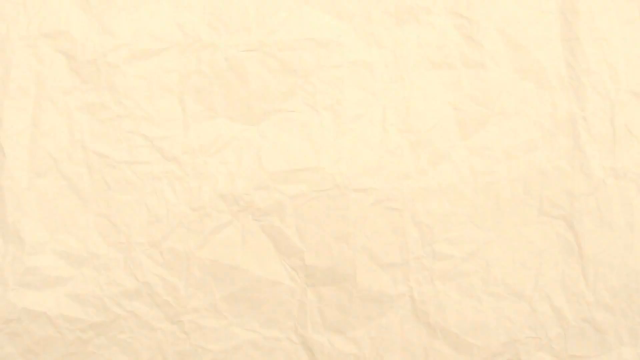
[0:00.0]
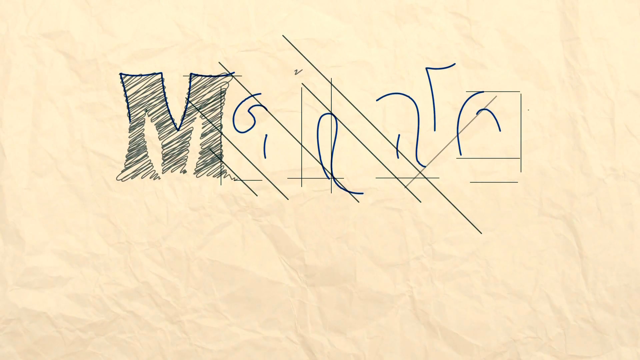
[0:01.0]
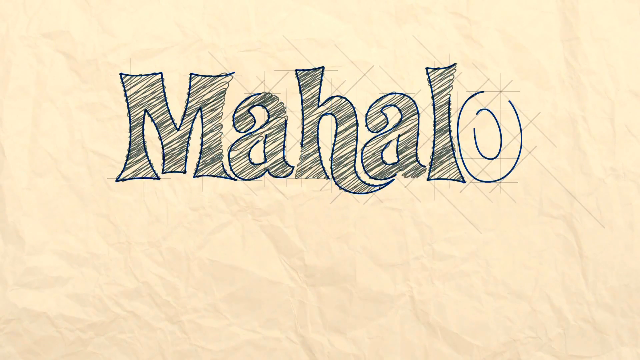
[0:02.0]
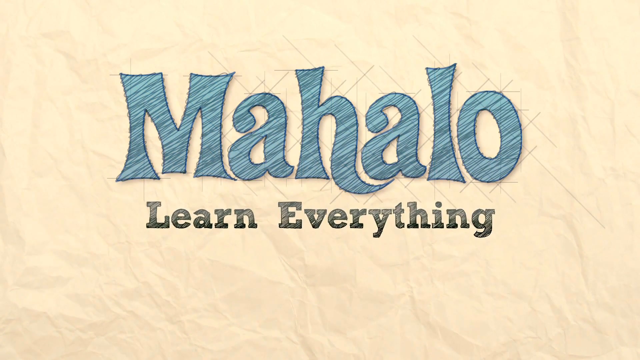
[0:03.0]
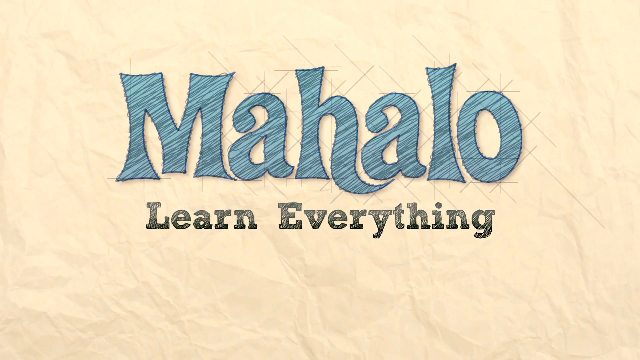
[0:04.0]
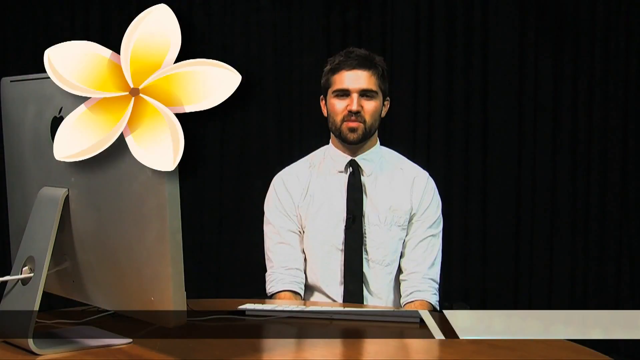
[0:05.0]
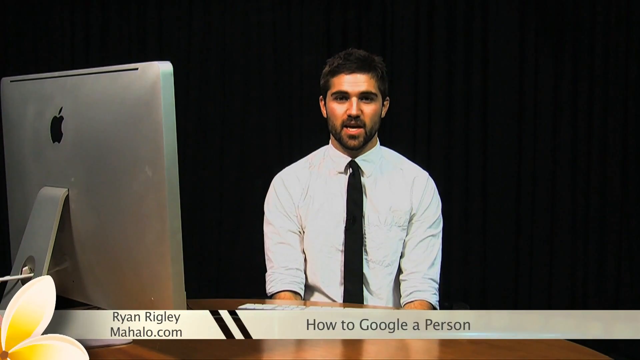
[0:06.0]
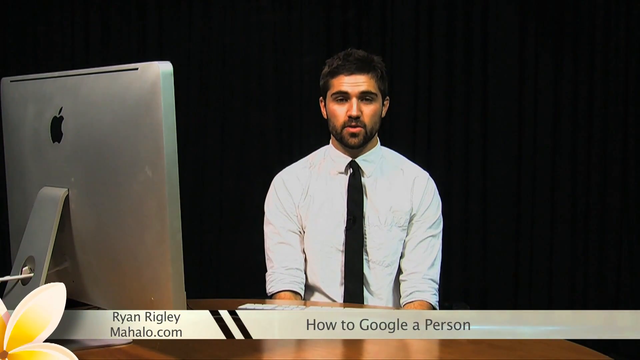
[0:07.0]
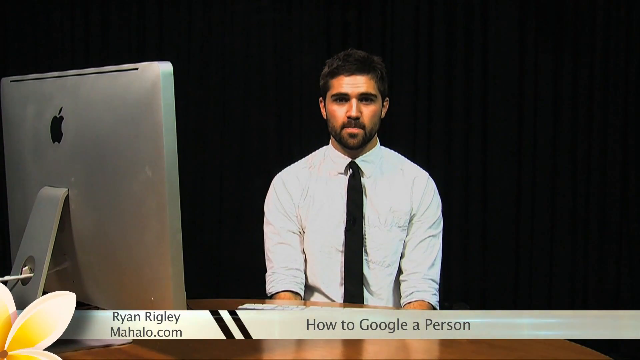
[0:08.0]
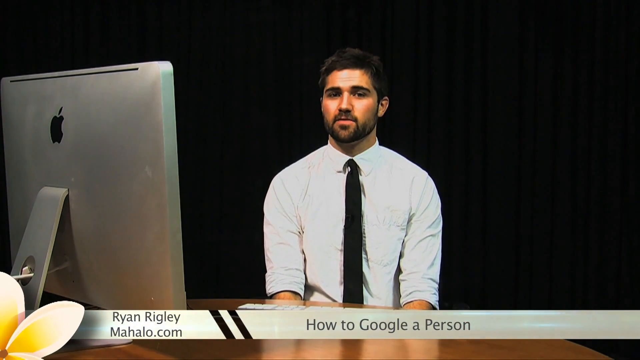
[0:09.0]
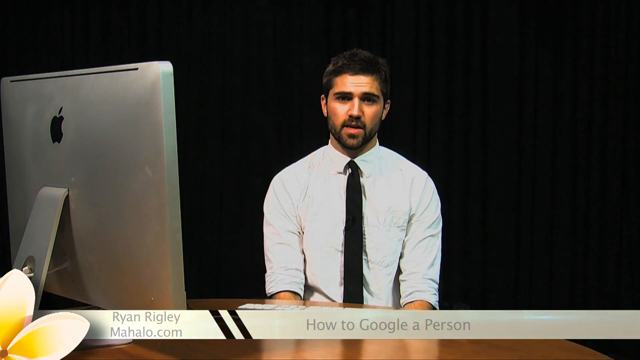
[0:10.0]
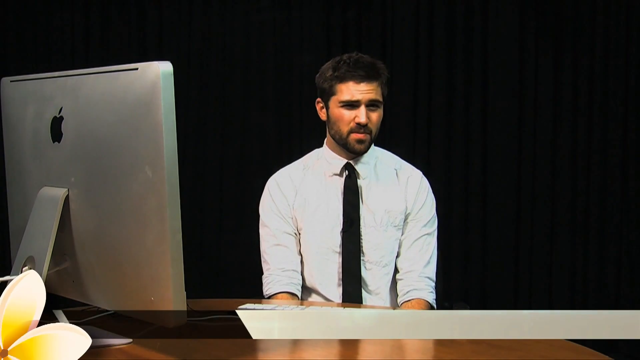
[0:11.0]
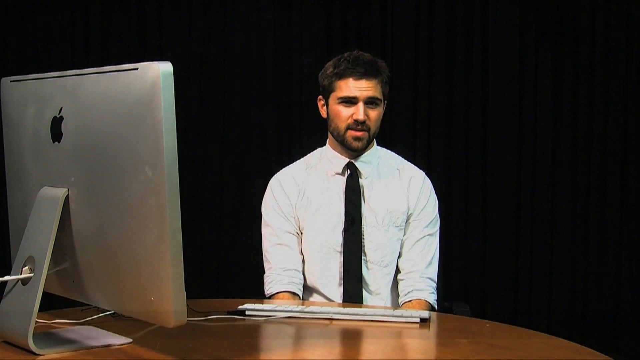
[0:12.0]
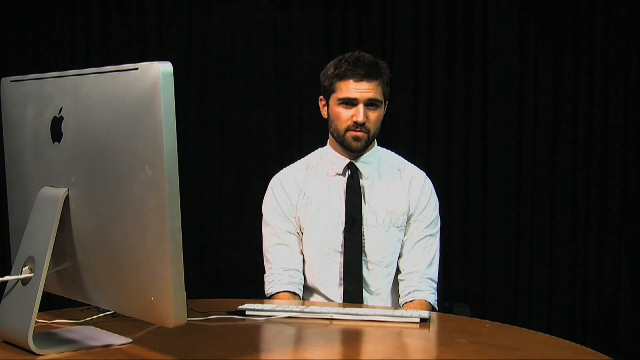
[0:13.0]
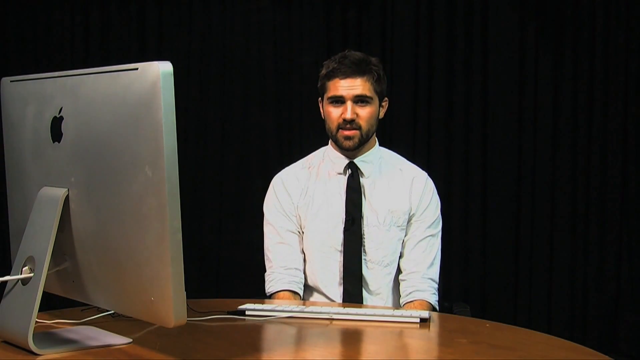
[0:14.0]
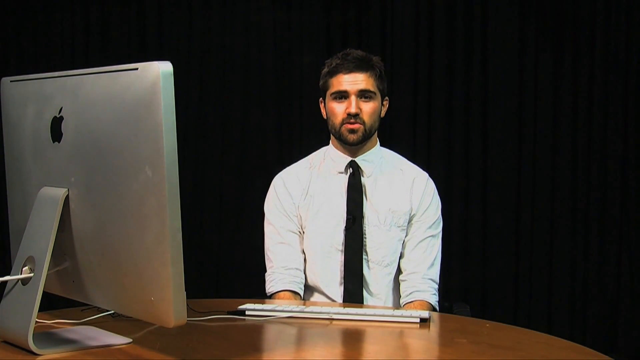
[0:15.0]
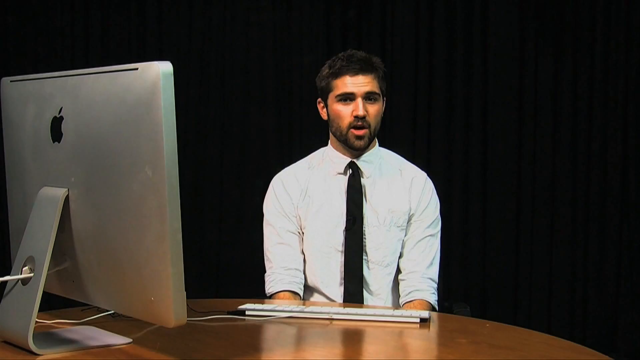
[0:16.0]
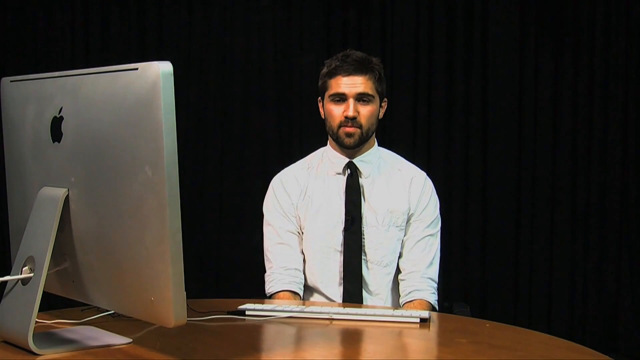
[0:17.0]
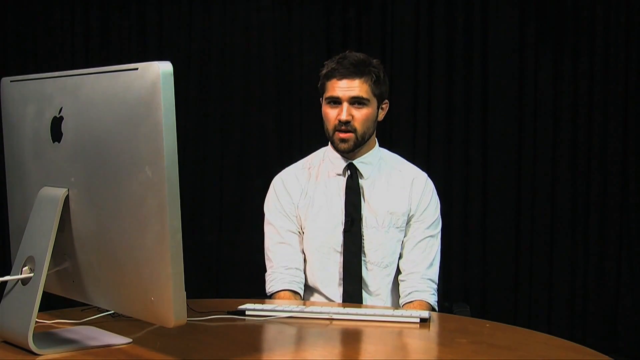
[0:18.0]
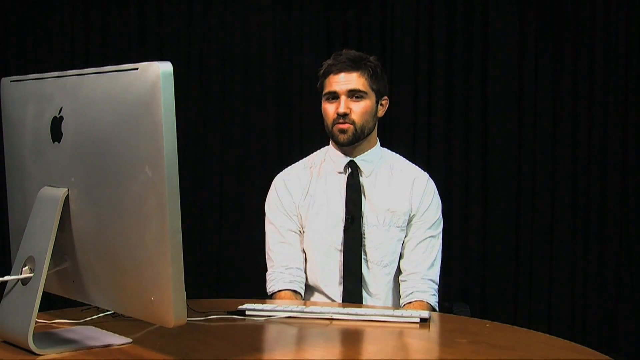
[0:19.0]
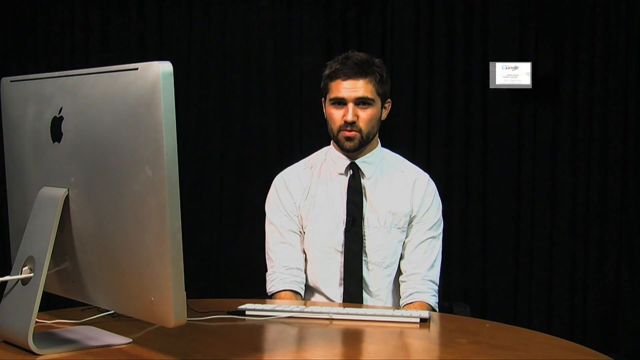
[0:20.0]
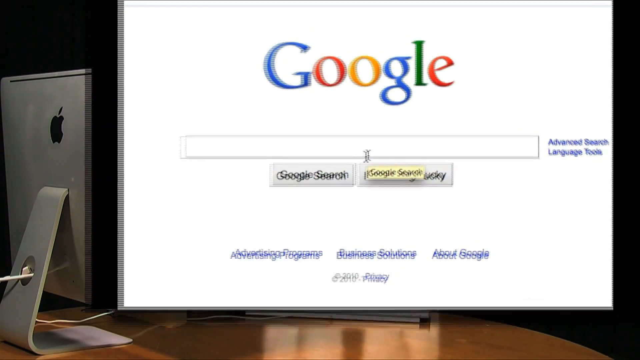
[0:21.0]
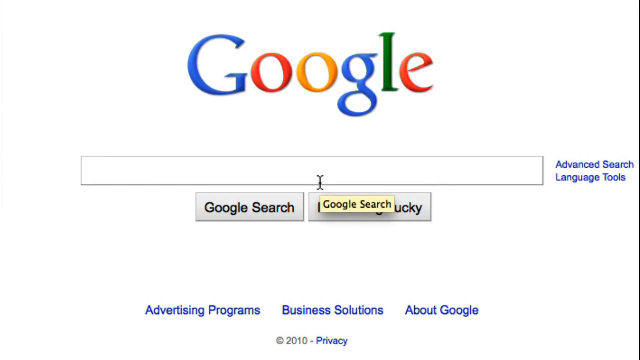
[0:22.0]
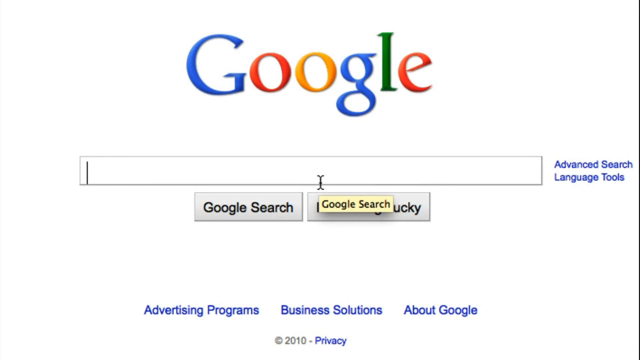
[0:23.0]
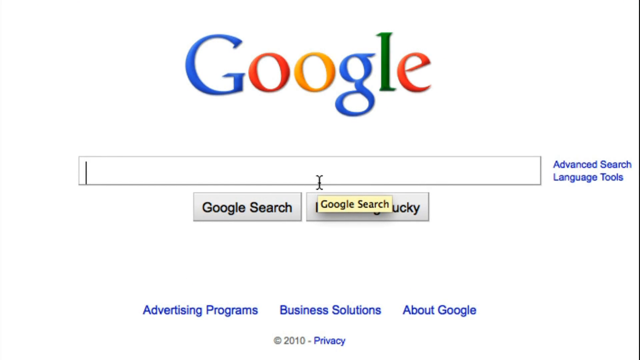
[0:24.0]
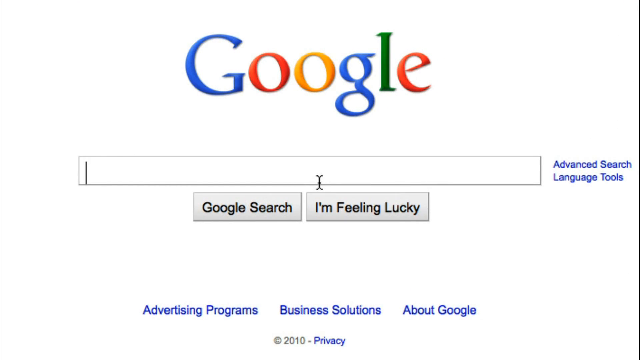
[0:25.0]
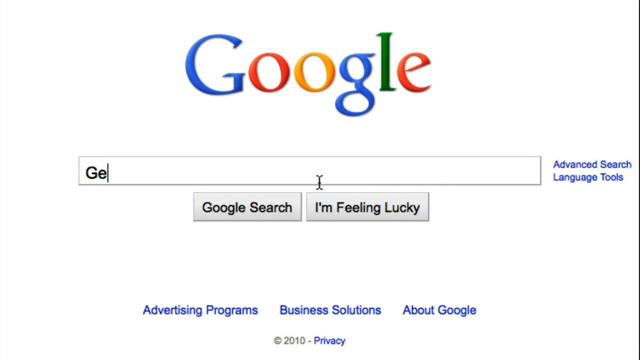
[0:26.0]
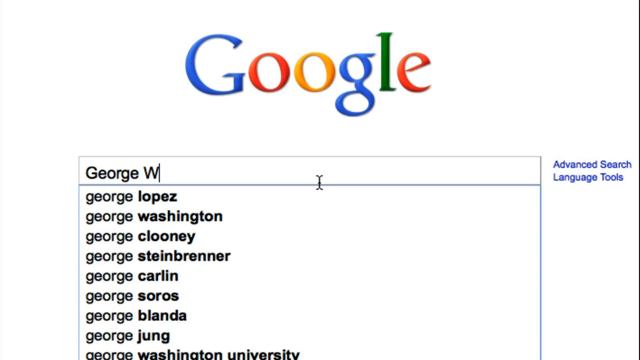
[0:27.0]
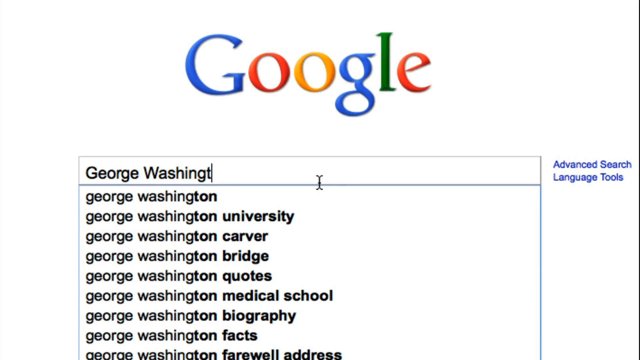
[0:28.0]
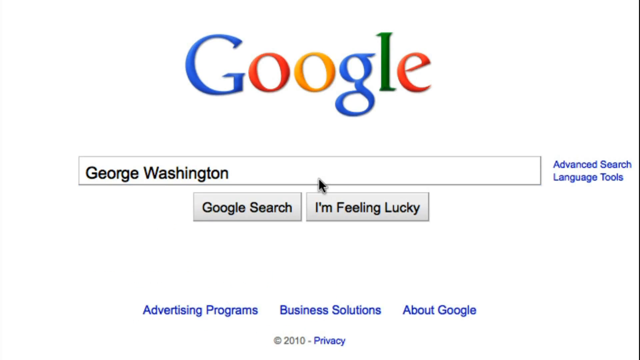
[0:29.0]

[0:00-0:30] The video begins with a beige screen. An animation of text pops up: the word "Mahalo" appears in gray and then turns blue, with the words "learn everything" written below it in gray. The screen then transitions to a man seated in front of an Apple Mac desktop monitor against a black background. He wears a white shirt and a black tie and has a trim beard and mustache. As he speaks, text across the bottom of the screen reads "how to Google a person." The desk he is sitting behind is a shiny wooden desk with curved edges, and his keyboard is on the desk in front of him. The reflection of his shirt and tie is visible on the polished surface of the desk. Next, a Google search engine screen appears; the mouse cursor blinks in the search box and the name George Washington is typed in.